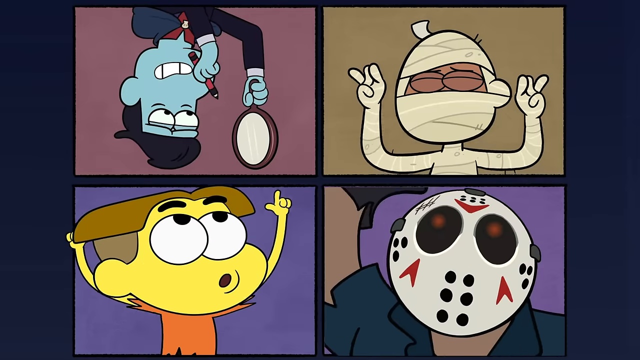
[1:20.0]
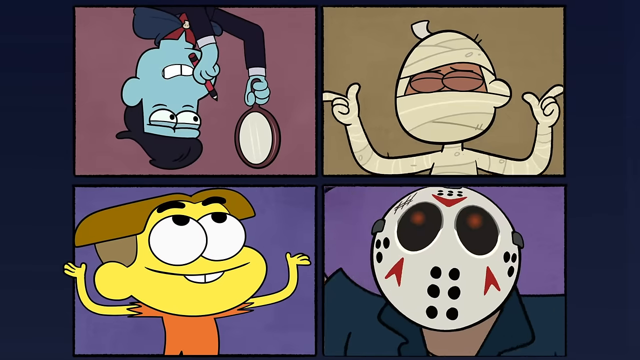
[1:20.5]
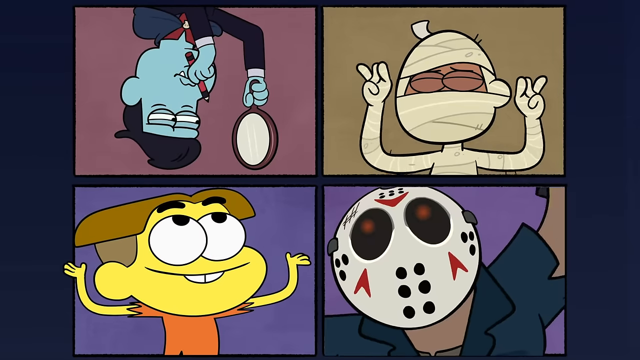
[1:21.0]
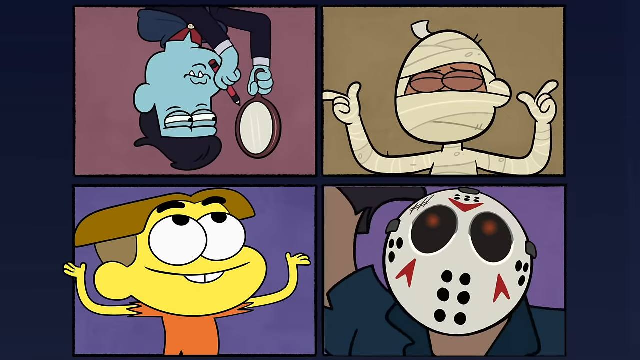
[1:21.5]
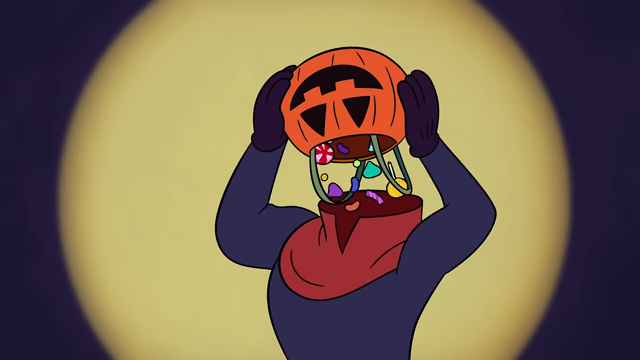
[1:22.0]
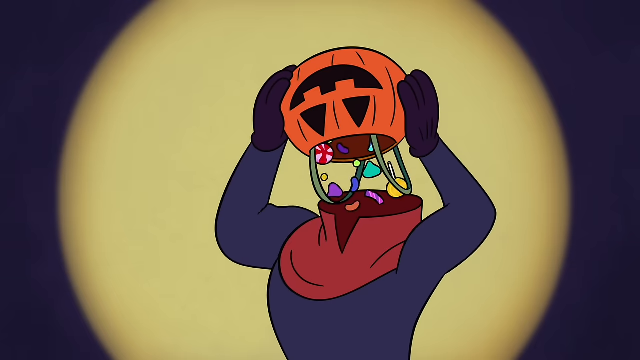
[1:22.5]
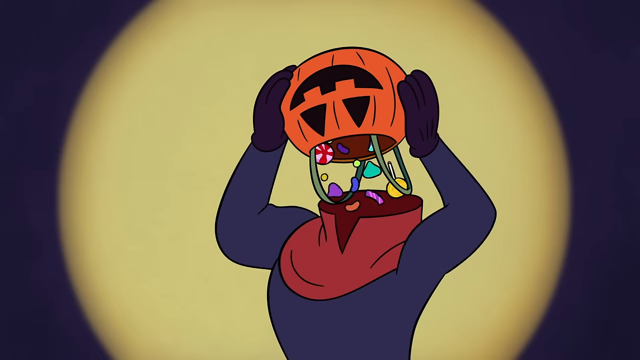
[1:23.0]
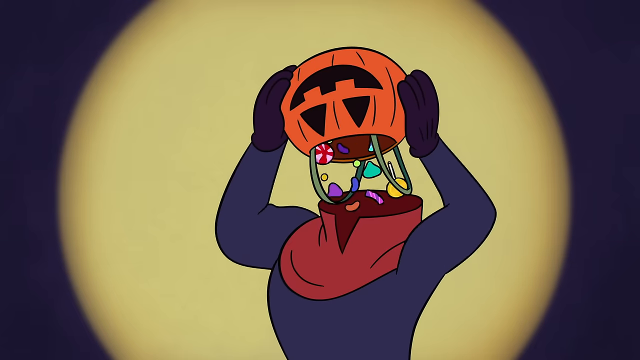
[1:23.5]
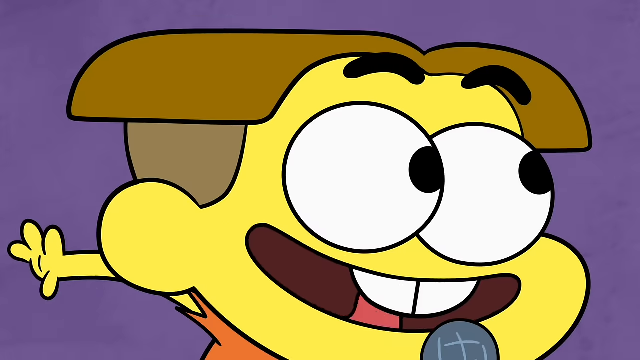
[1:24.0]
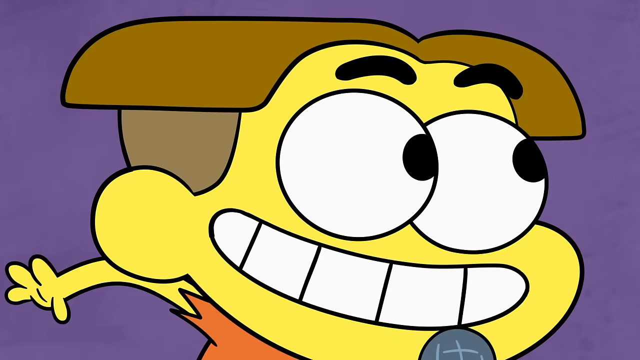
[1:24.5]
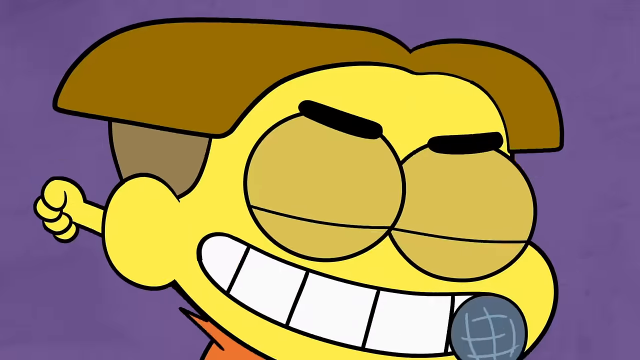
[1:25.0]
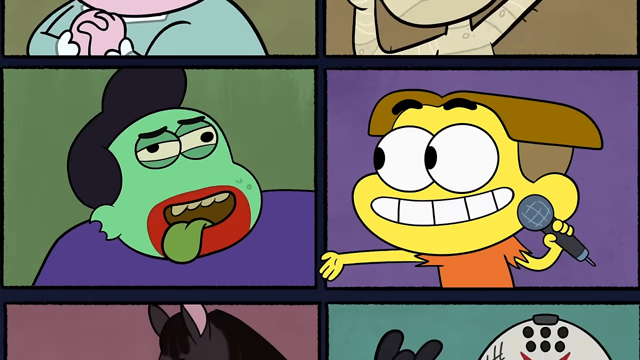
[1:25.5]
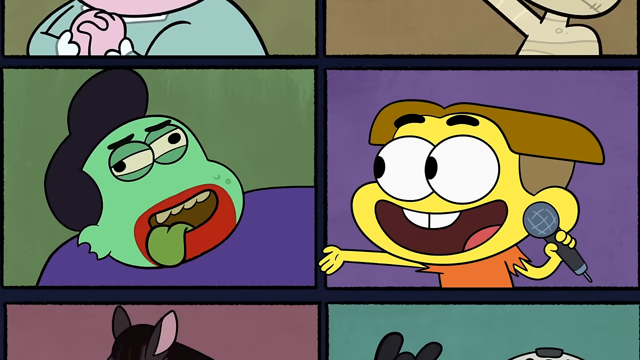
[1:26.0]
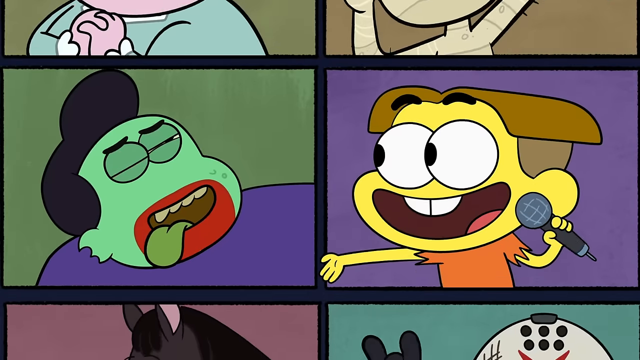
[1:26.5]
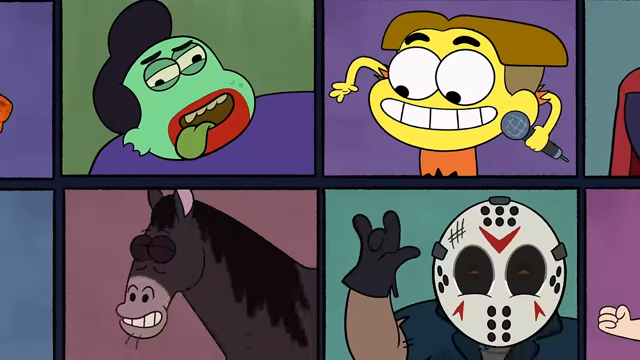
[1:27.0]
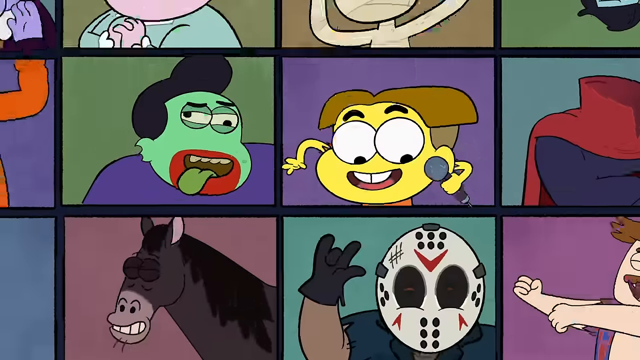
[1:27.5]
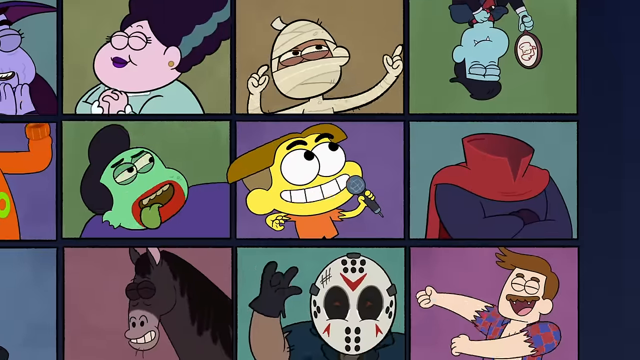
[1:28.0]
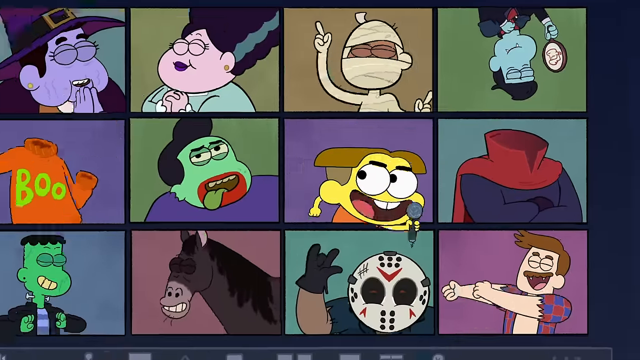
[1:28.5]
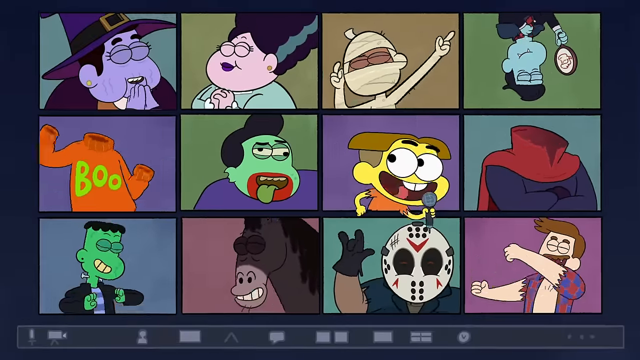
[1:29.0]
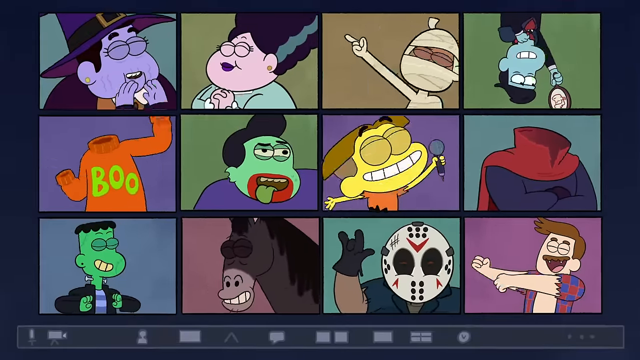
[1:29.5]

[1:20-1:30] The characters are apparently still singing the song over the Zoom call, with Dracula now in the top left, the child on the bottom left, a mummy on the top right, and Freddy Krueger on the bottom right. A headless person dumps Halloween candy from a pumpkin candy holder into his neck hole. It cuts back to the kid singing into a microphone. They are all kind of bobbing, moving their hands and swaying, with their mouths moving as if they are all singing the same song or part of it. The camera transitions to whoever is currently singing, or maybe just cycles between all the members of the group.